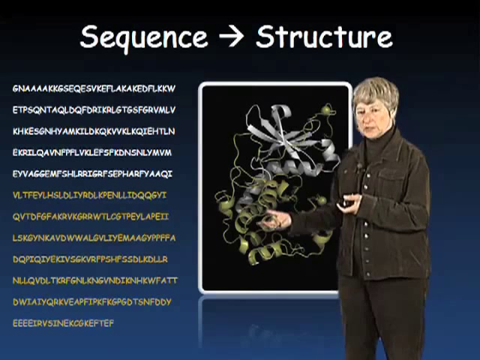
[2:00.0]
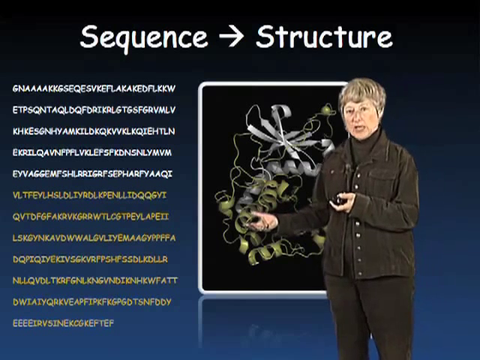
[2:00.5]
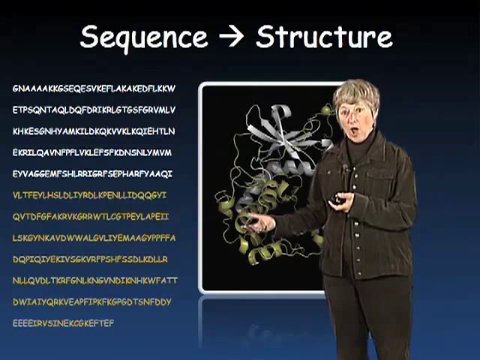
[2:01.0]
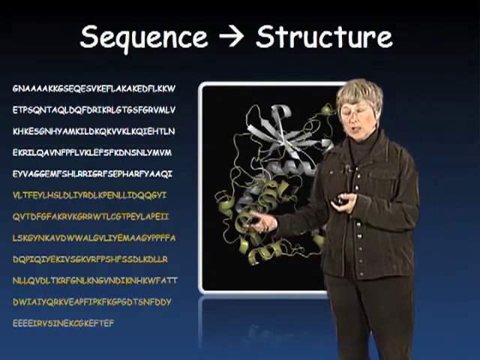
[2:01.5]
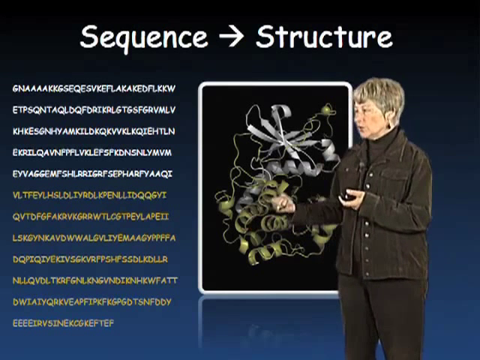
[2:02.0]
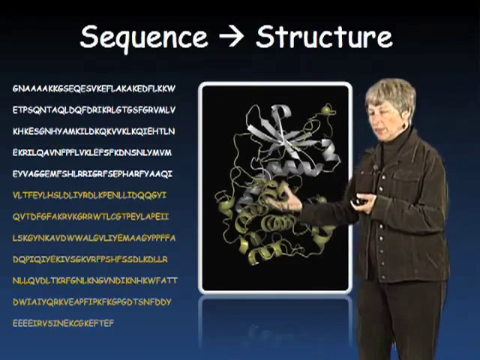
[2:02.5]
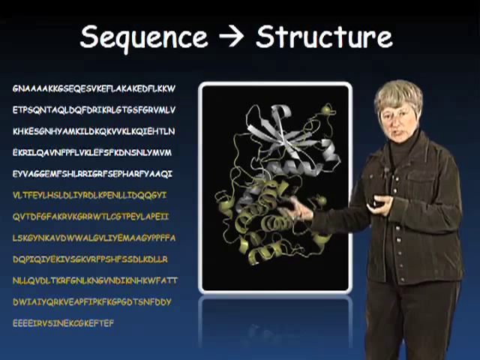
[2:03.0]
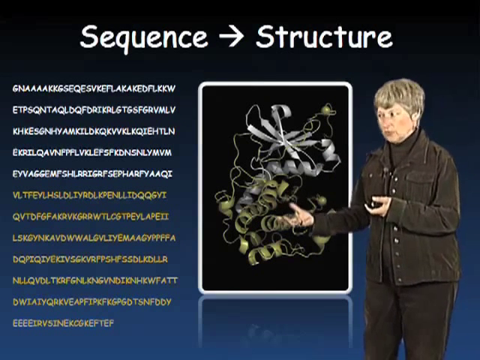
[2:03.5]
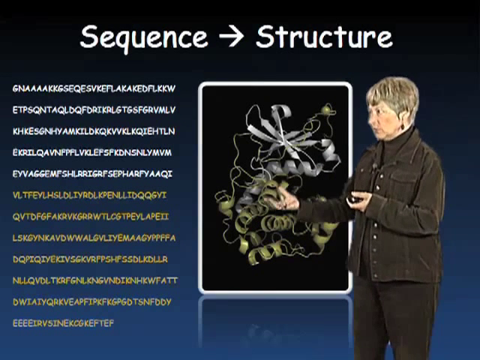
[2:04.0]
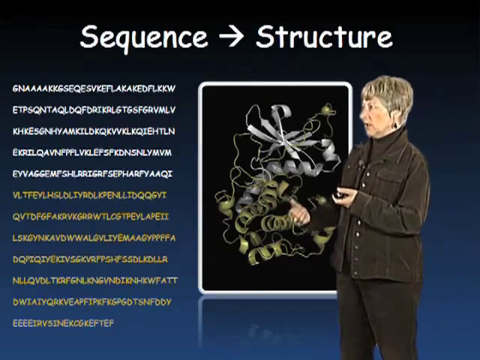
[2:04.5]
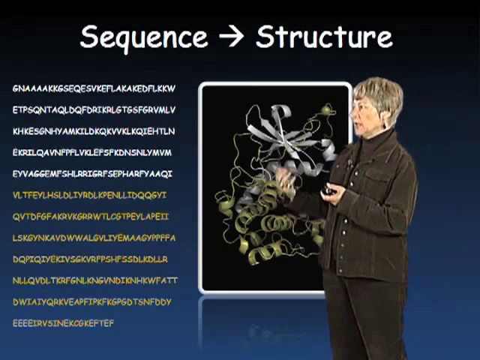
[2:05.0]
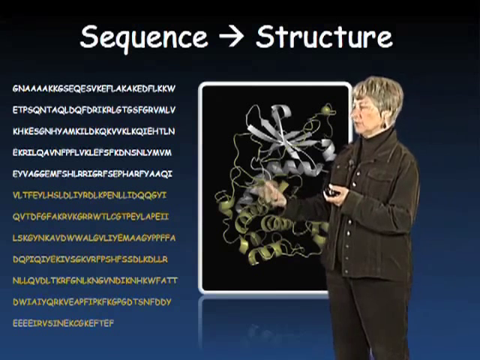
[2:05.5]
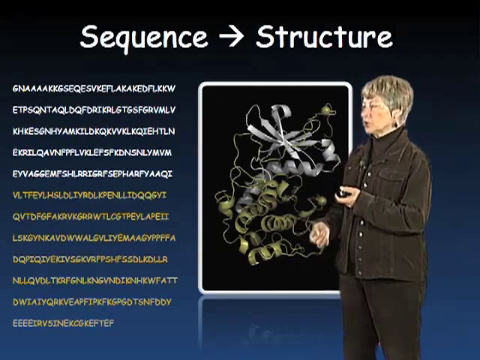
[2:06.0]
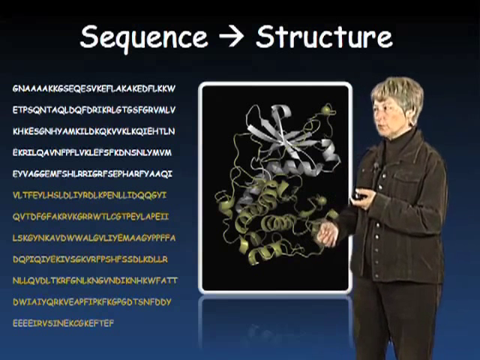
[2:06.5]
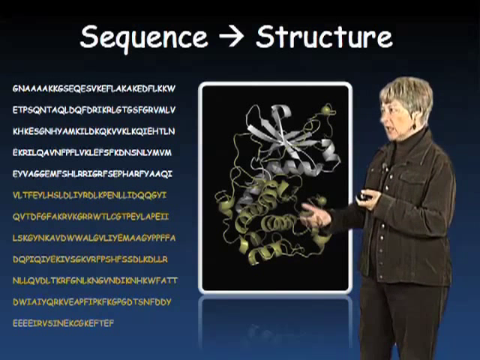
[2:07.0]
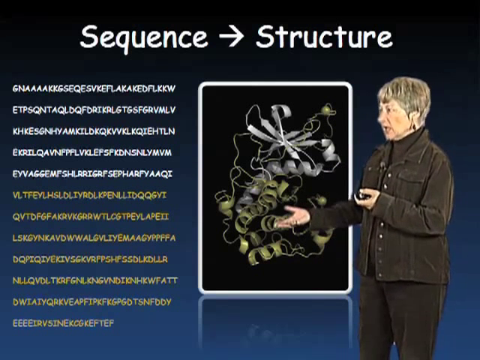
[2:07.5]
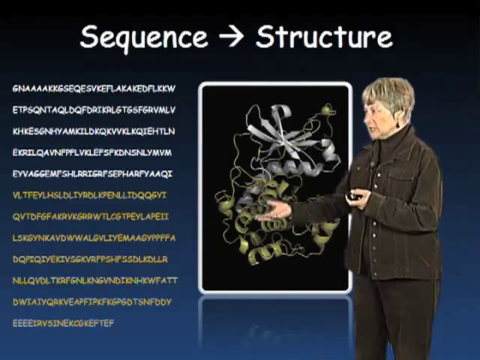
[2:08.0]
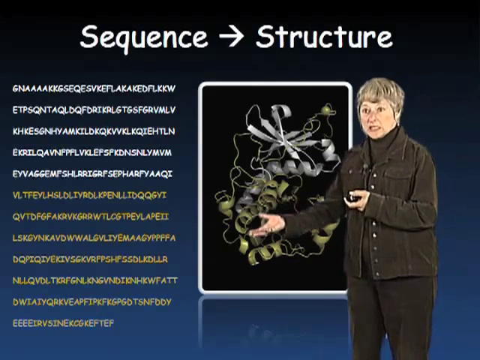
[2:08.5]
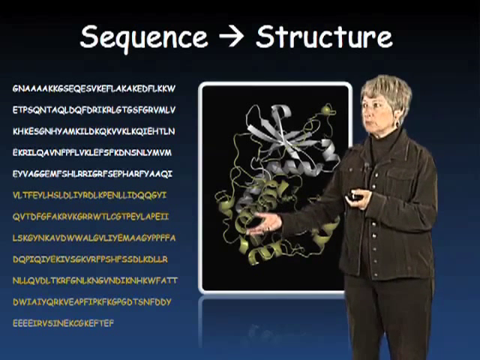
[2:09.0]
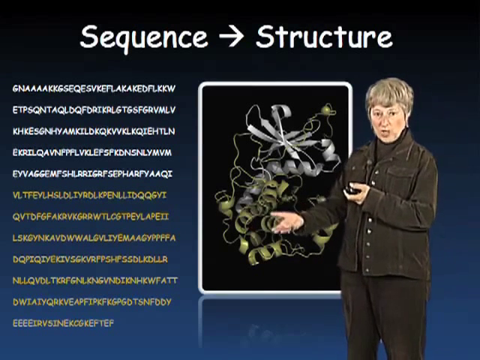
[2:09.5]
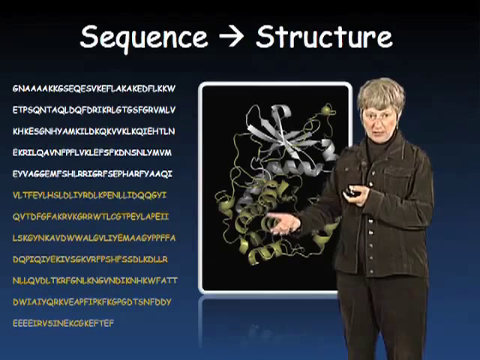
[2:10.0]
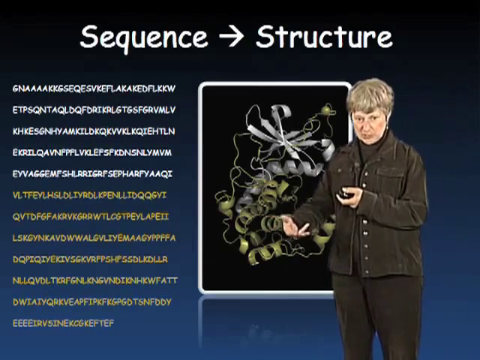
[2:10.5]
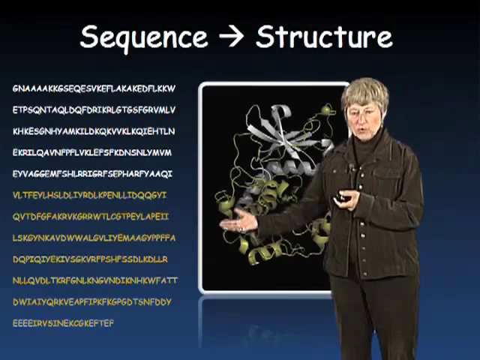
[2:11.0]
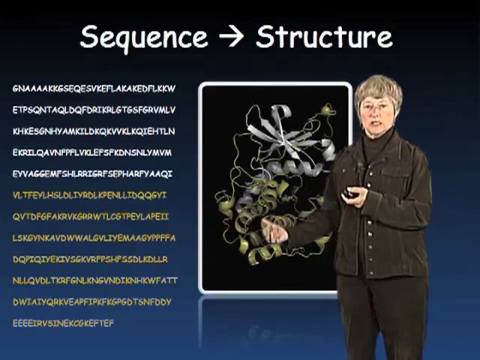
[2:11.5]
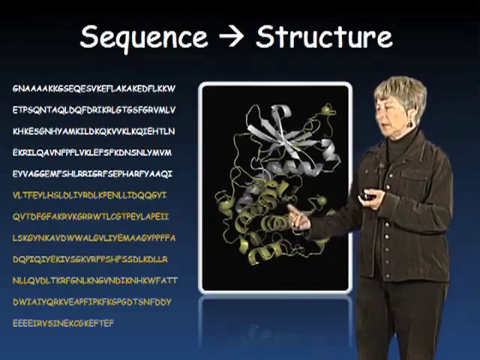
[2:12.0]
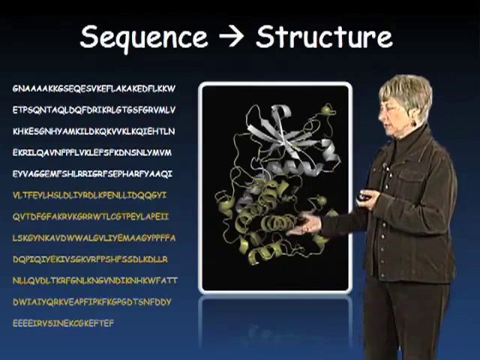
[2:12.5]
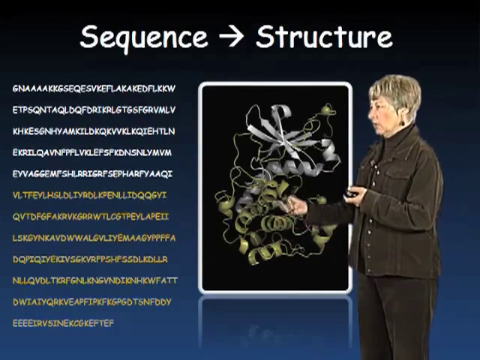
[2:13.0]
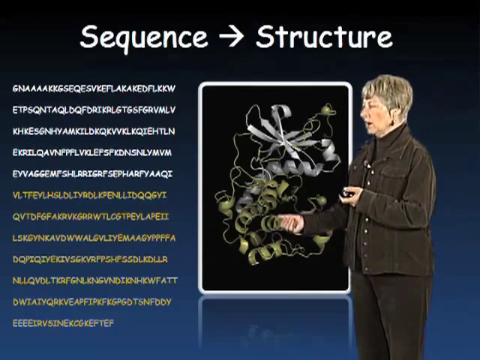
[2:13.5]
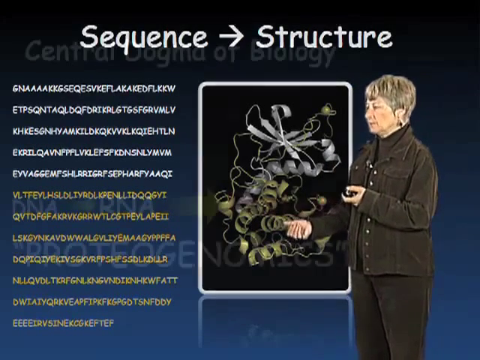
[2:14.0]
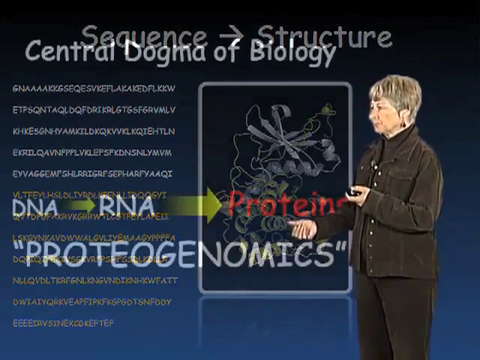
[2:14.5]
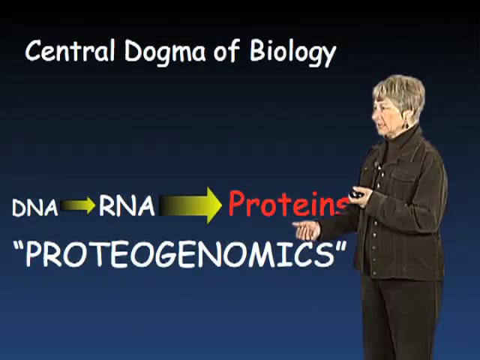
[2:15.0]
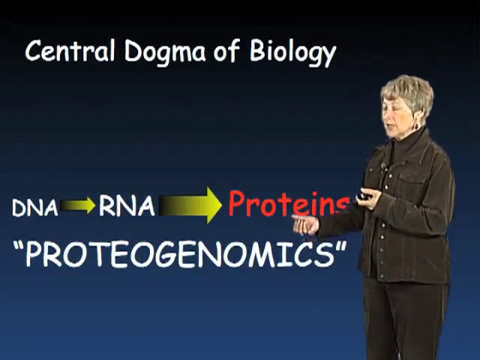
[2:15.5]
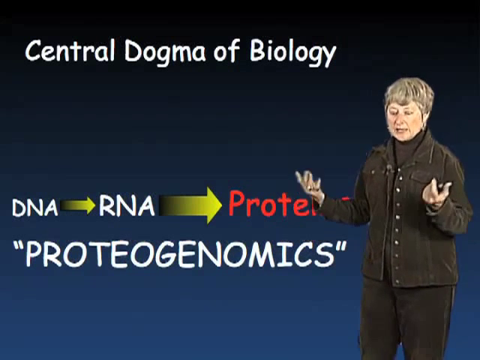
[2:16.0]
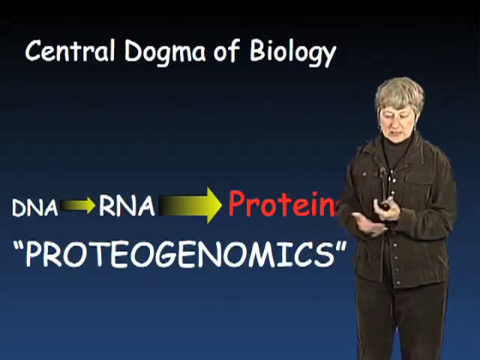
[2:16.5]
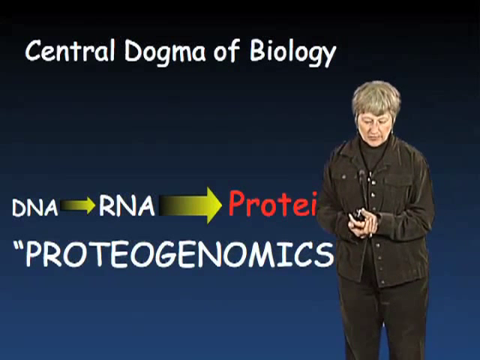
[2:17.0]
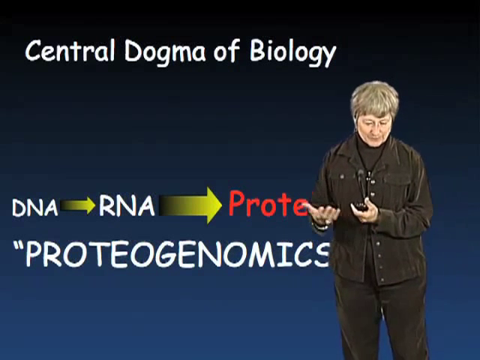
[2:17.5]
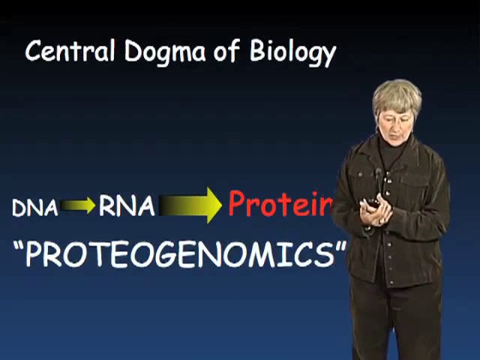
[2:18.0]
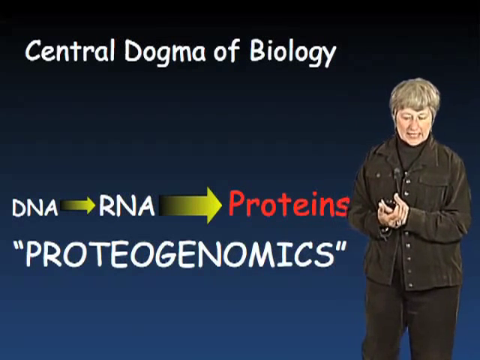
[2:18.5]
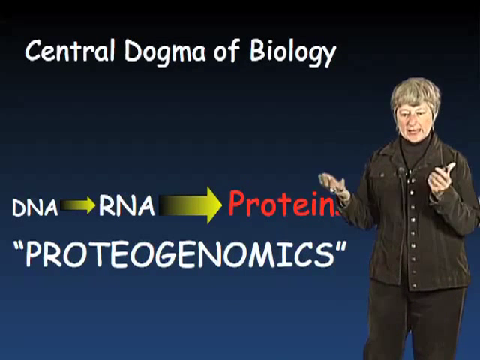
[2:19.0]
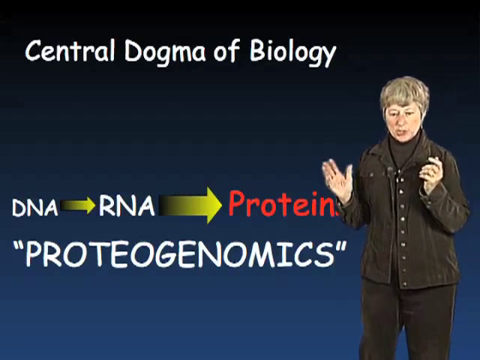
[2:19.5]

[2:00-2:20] A speaker, a Caucasian woman, stands in the bottom right corner of the screen, holding a clicker in her left hand and gesturing with her right hand. The top of the screen reads "sequence to structure," and many sequences that differ from each other are listed on the left side. A rectangular frame surrounds abstract objects: curls, petals and squiggly lines. Next, a new screen reads "central dogma of biology, DNA to RNA to proteins, proteogenomics." The woman continues speaking from the corner of the screen and gestures with her hands. She points with her right hand to the sequences on the left side of the screen and looks in that direction as she speaks, then turns toward the camera and speaks more.